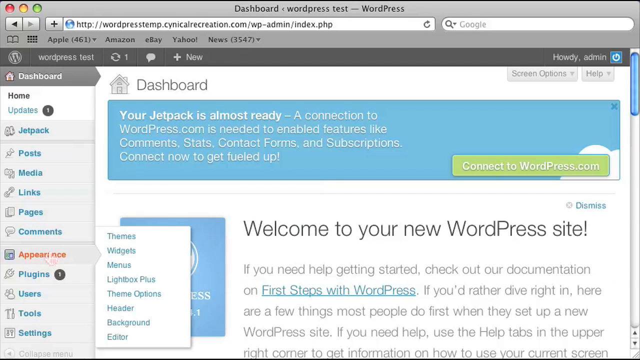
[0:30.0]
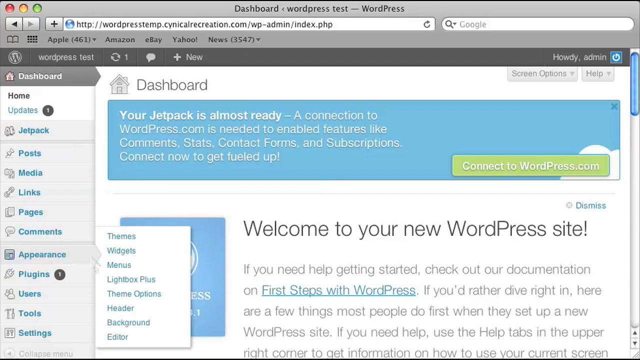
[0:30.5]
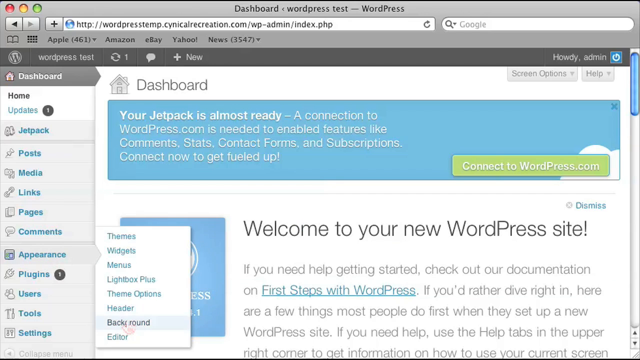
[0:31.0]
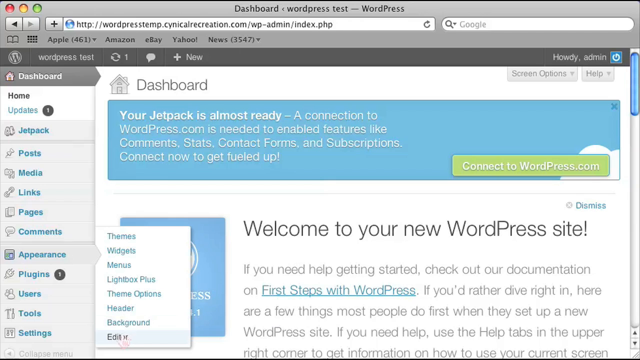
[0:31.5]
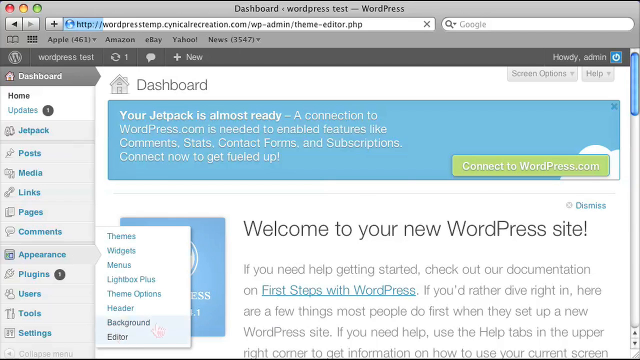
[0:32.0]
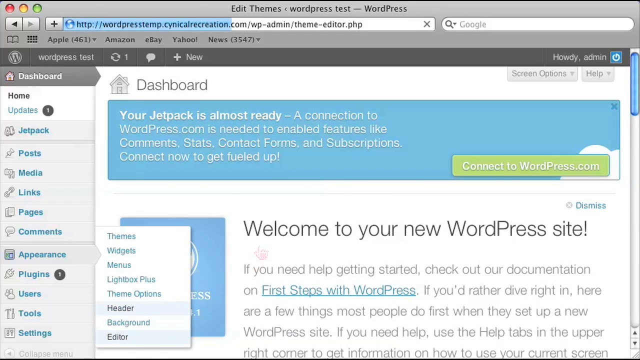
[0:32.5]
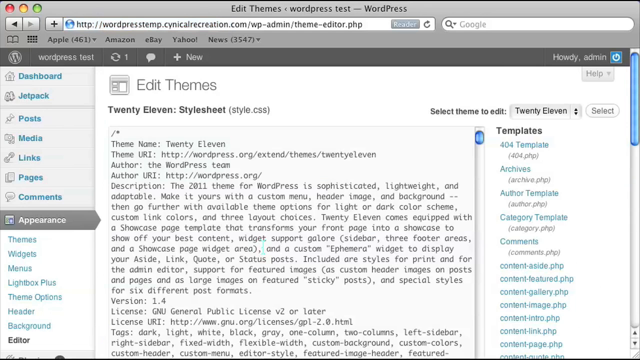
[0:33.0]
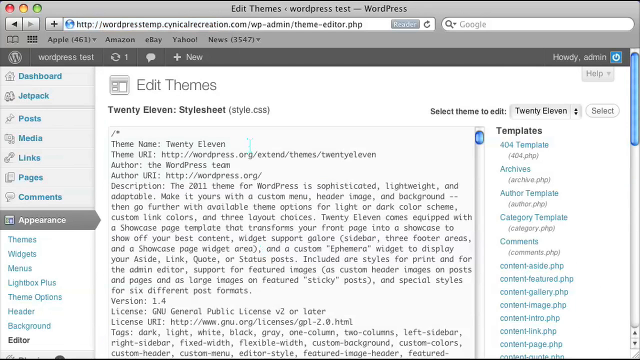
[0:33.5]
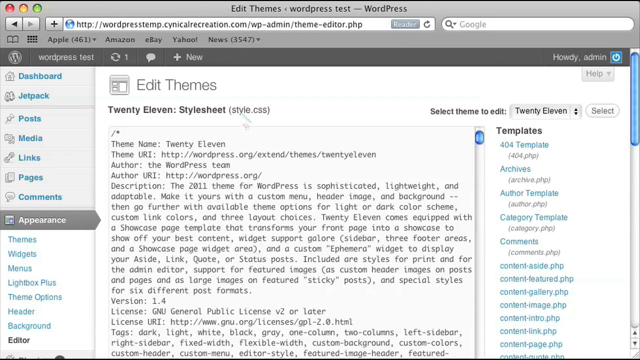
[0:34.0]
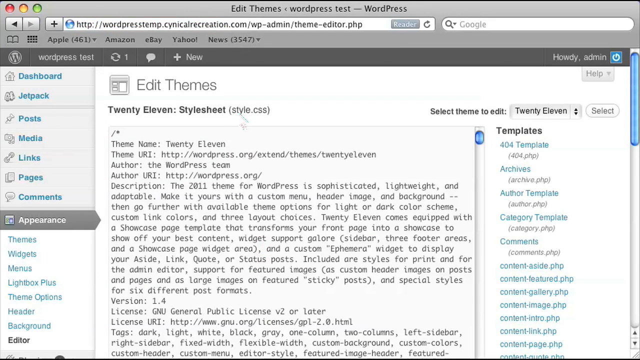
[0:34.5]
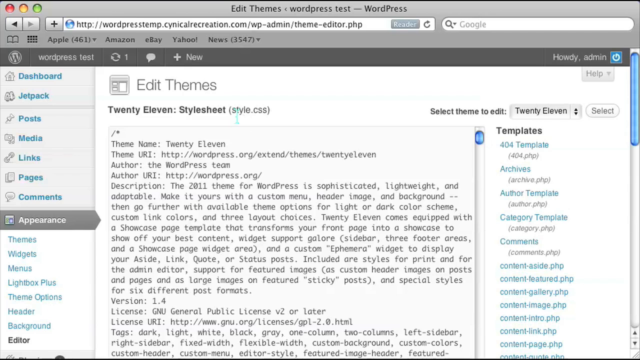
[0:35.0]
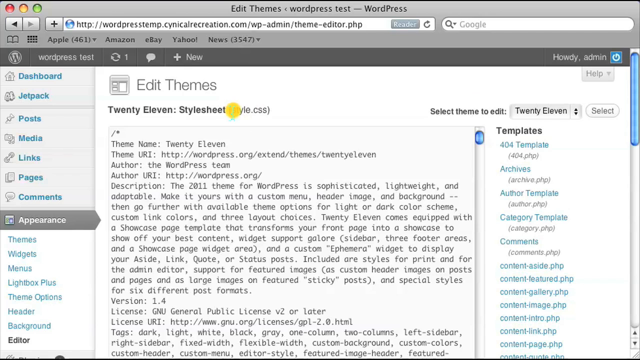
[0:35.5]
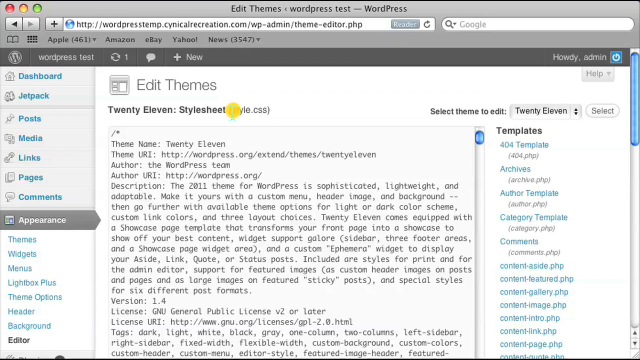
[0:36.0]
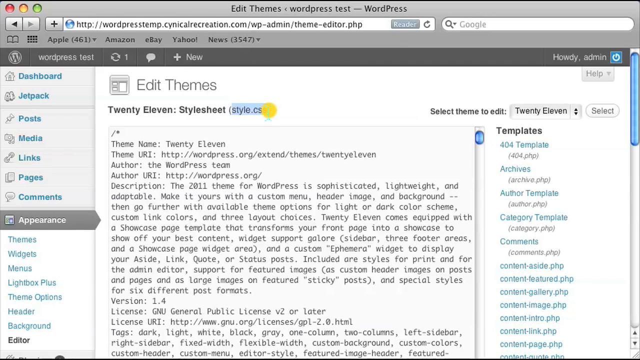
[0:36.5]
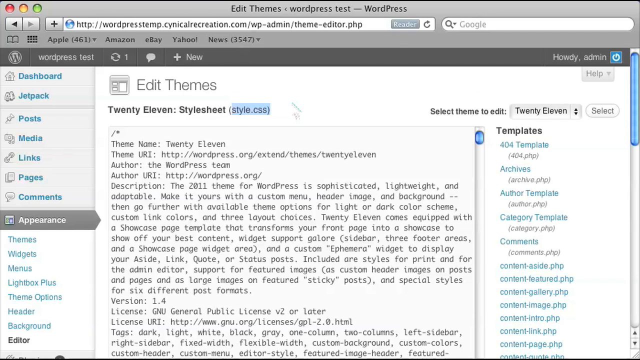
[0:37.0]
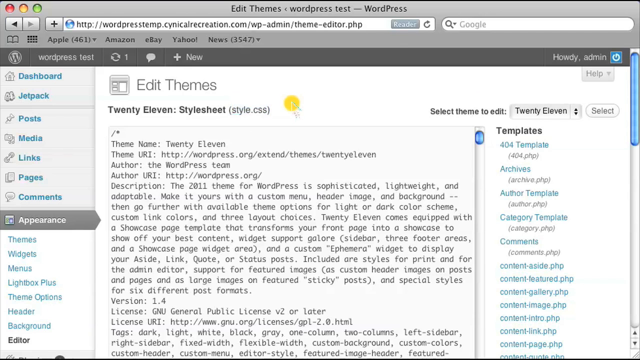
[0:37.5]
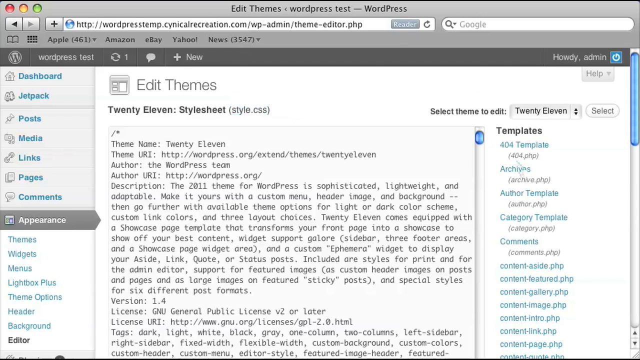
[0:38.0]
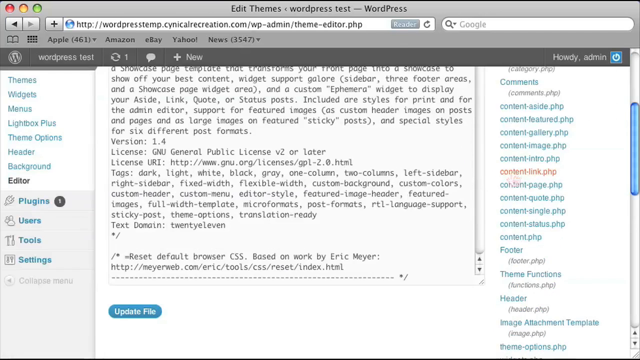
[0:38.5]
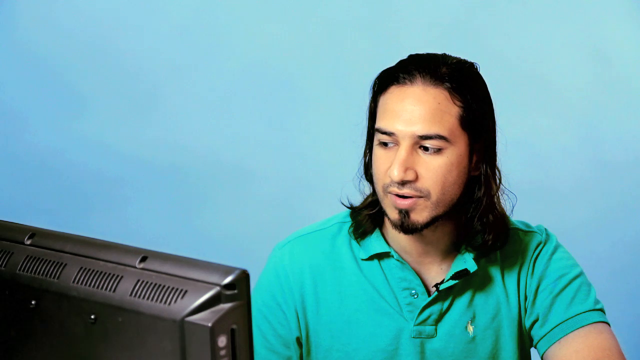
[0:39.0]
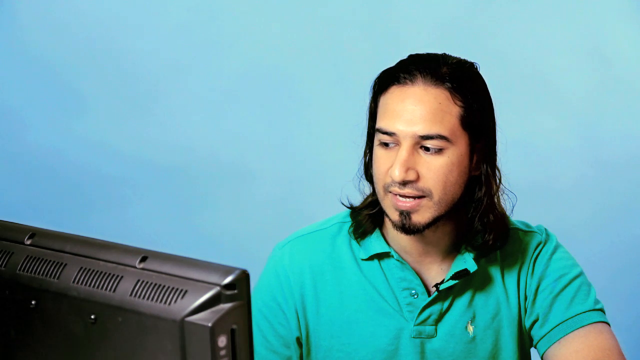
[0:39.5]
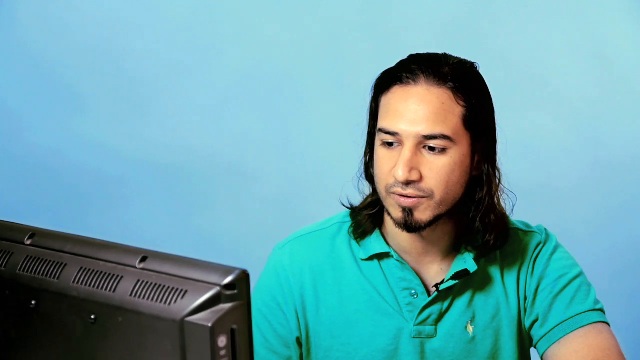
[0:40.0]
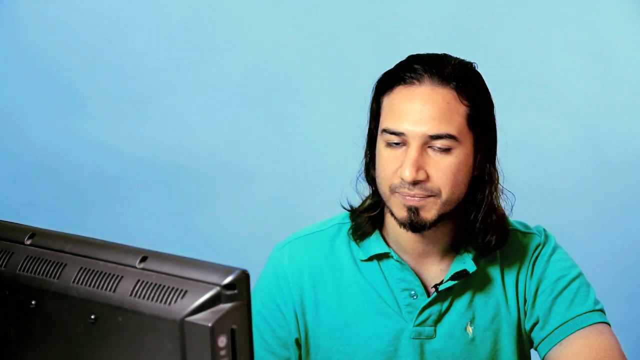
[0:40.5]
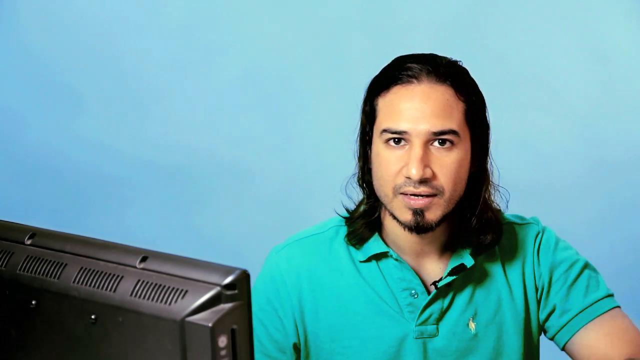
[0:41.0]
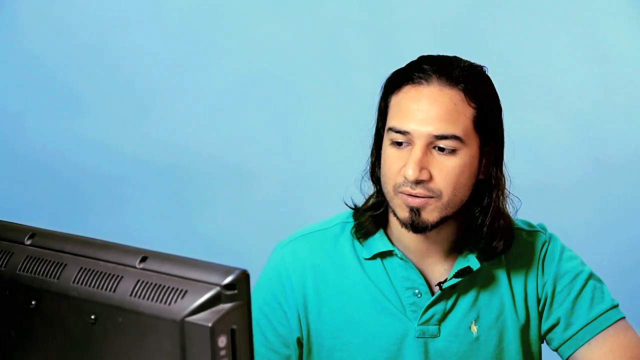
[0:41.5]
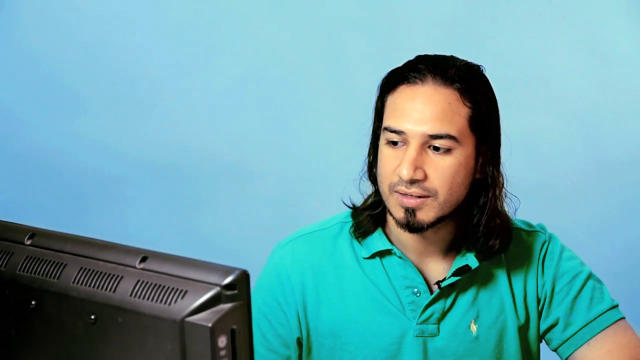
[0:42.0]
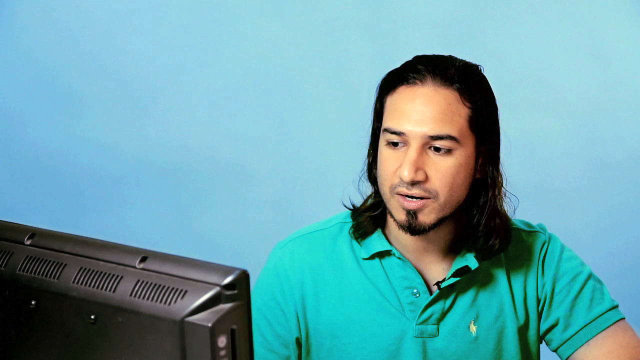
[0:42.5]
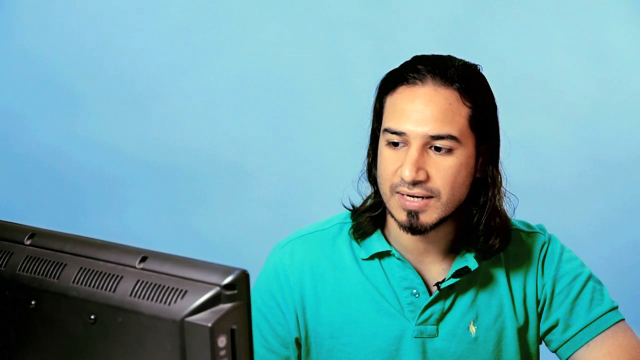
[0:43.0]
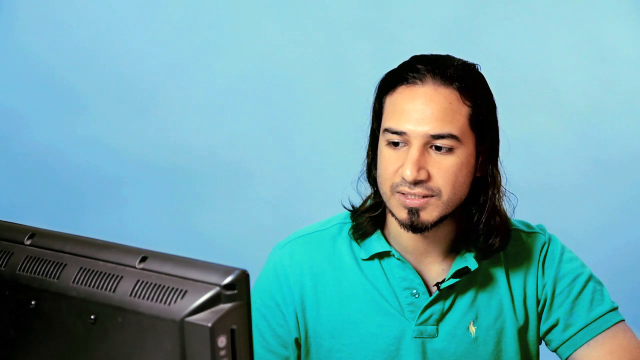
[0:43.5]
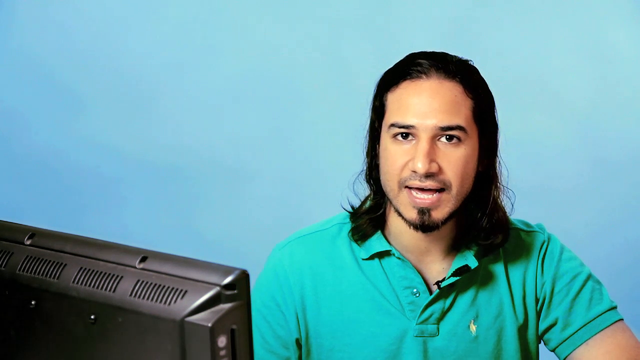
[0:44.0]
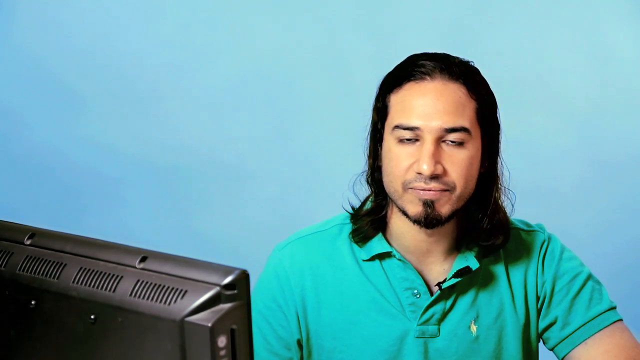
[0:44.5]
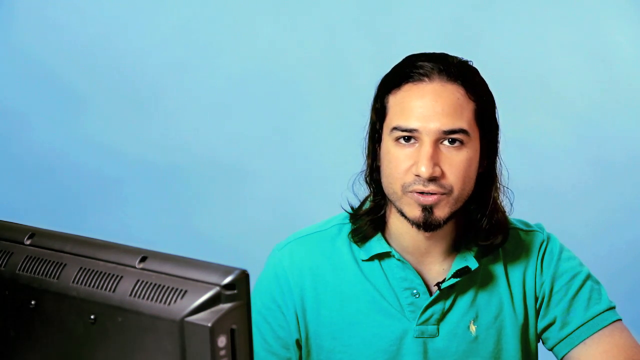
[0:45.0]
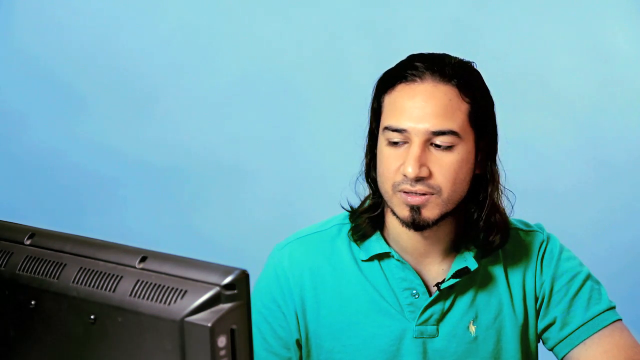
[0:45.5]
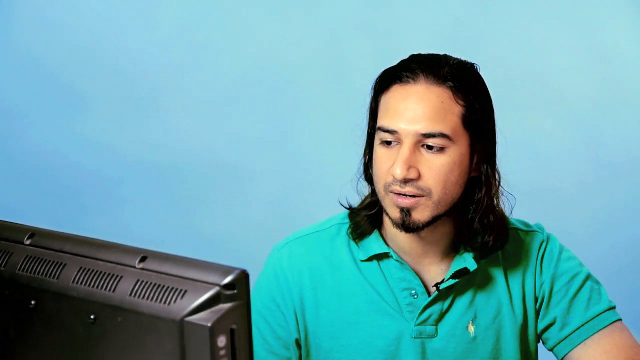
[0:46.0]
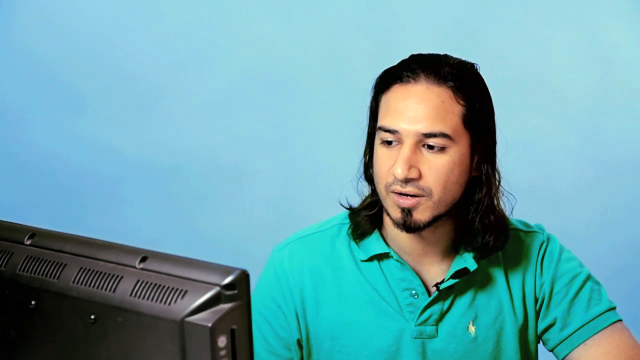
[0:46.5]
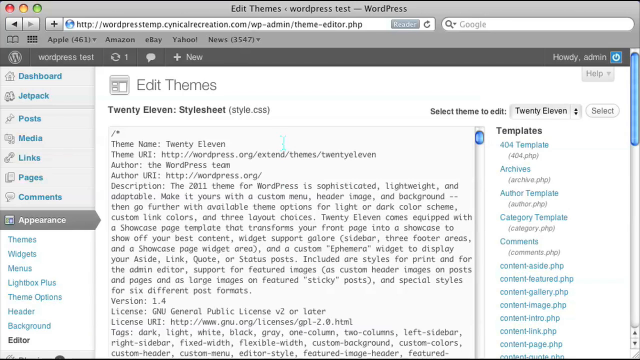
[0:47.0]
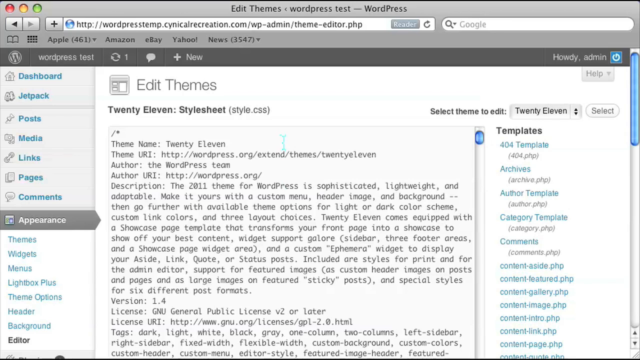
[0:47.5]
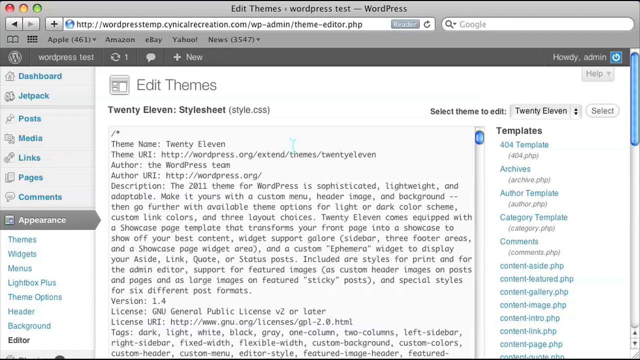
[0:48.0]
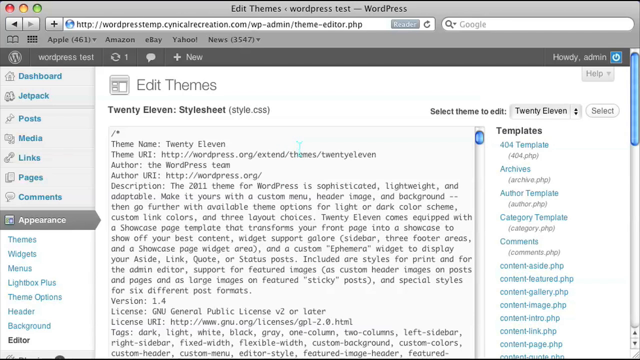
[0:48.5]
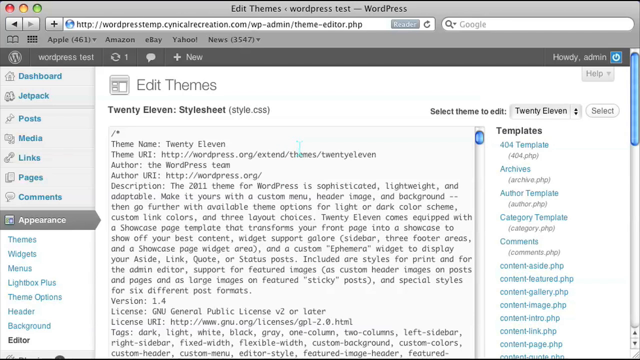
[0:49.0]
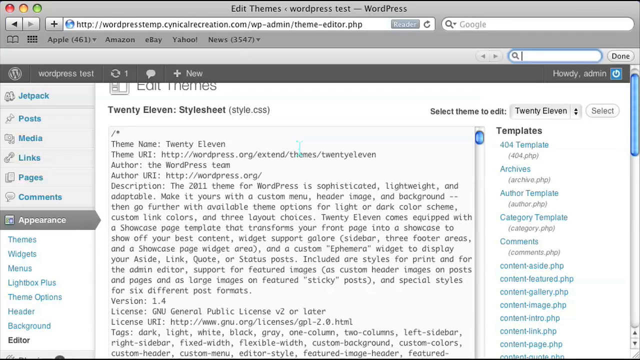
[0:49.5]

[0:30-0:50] A computer screen shows a row of items across the top, reading from left to right: "Apple", "1461", a down arrow, "Amazon", "eBay", "Yahoo", "News", "3547", and another down arrow. Above this is the URL, and above that it says "Dashboard WordPress Test-WordPress". The page reads "Welcome to New WordPress Site". On the left is a drop-down menu in blue letters reading from top to bottom "Theme", "Widget", "Menu", "Lightbox+", "Theme Options", "Header", "Background", and something else. The cursor clicks on something and a new page opens with "Edit Themes" at the top. The page scrolls down. The video then returns to the Native American or Mexican man talking; he looks over at the computer screen, back to the camera, then back to the computer screen. An image of the computer screen follows: at the top it says "2011 Style Sheet", to the right "Style.css" in parentheses, to the right of that "Select Theme to Edit", then "2011", and then a Select button.